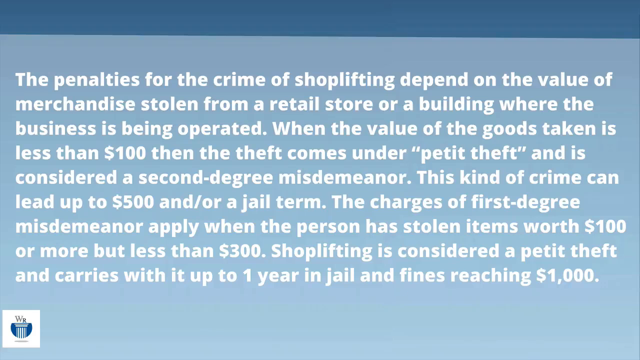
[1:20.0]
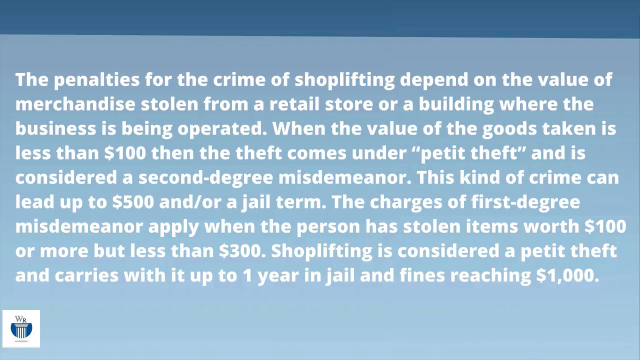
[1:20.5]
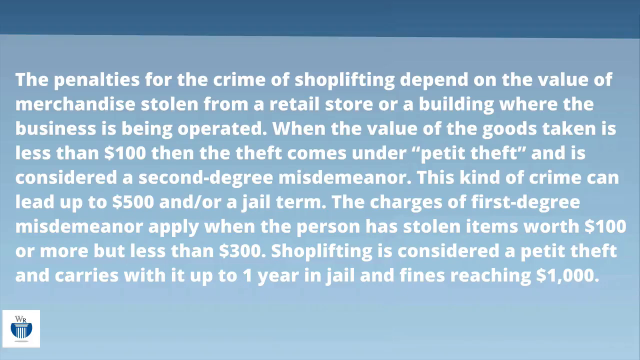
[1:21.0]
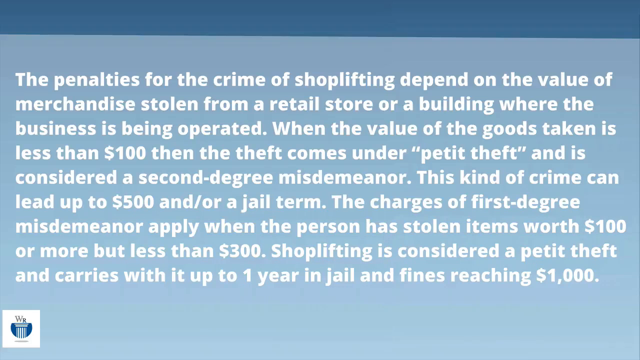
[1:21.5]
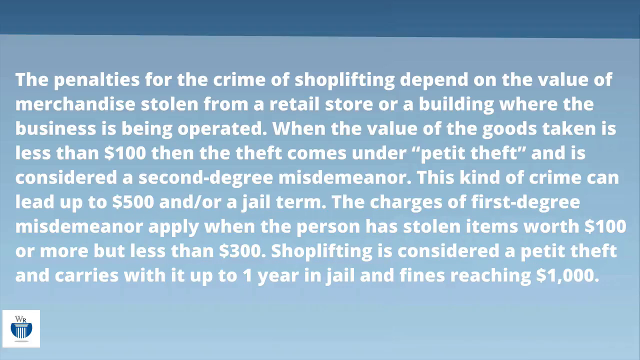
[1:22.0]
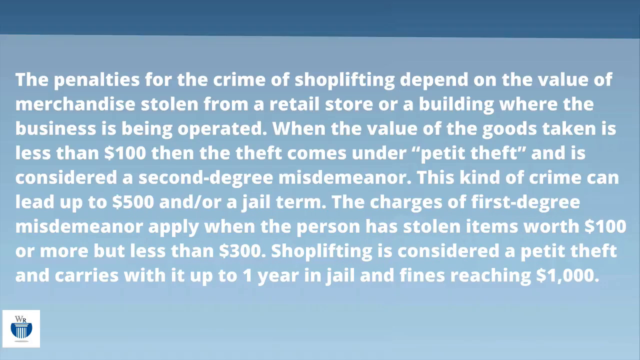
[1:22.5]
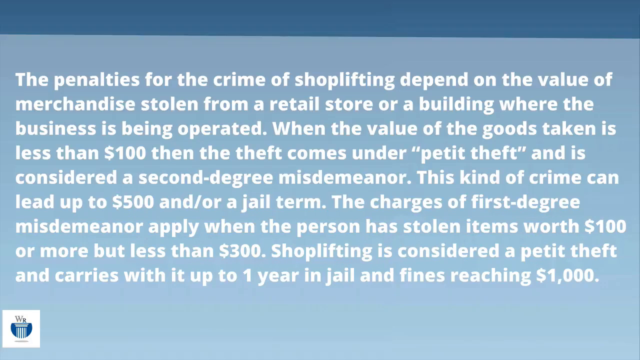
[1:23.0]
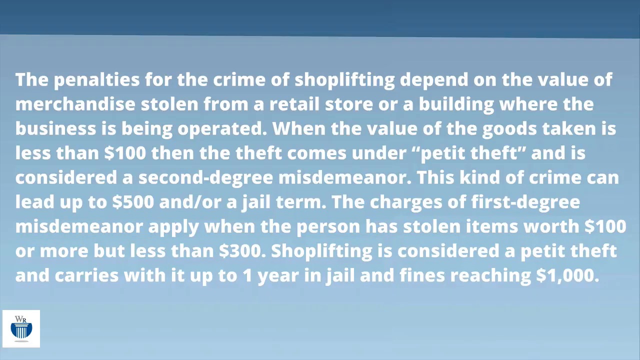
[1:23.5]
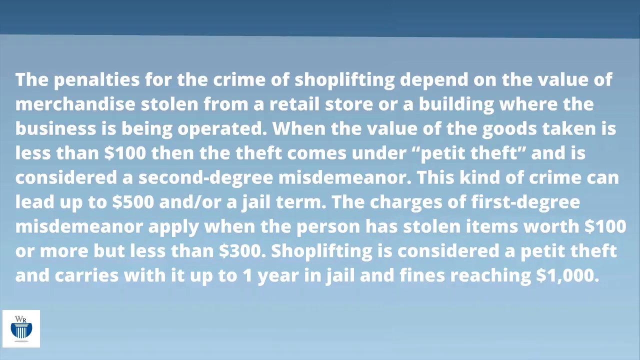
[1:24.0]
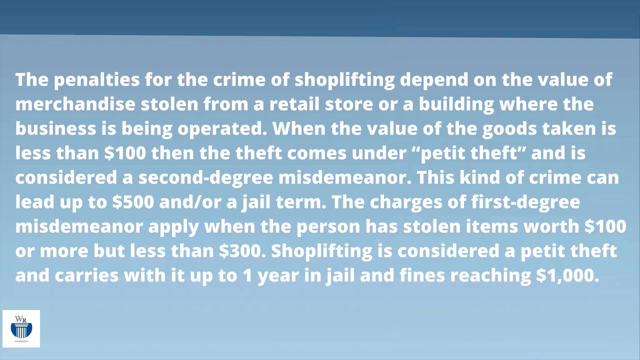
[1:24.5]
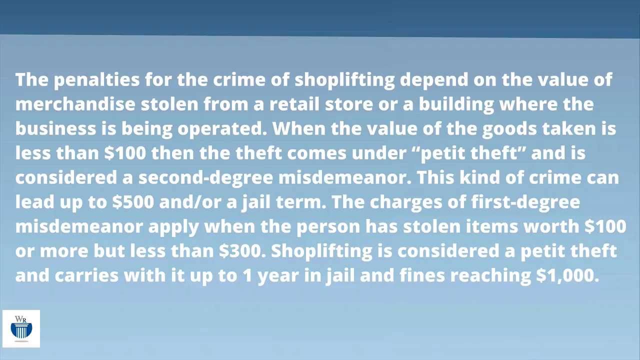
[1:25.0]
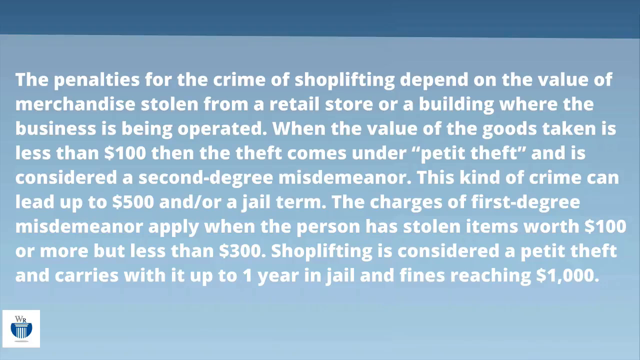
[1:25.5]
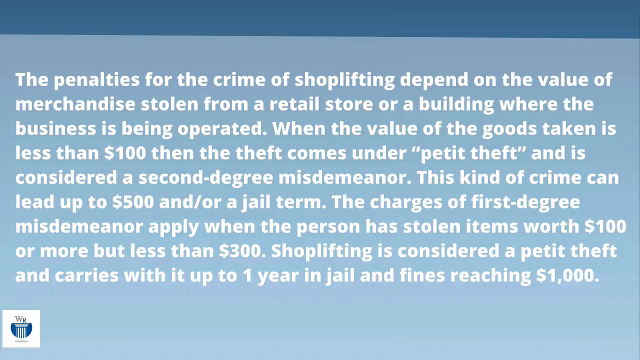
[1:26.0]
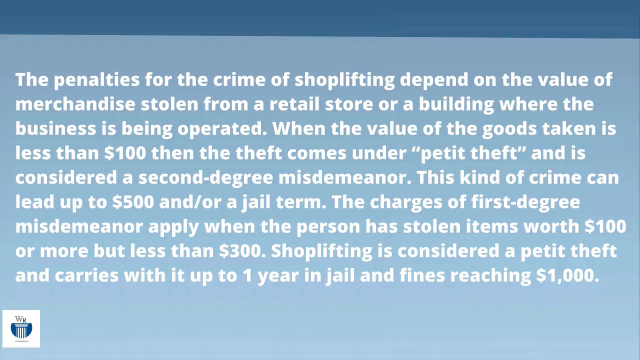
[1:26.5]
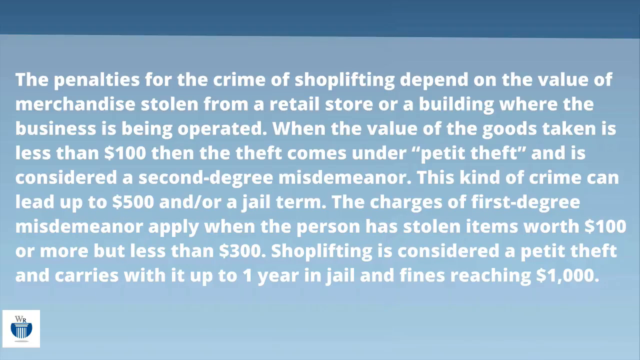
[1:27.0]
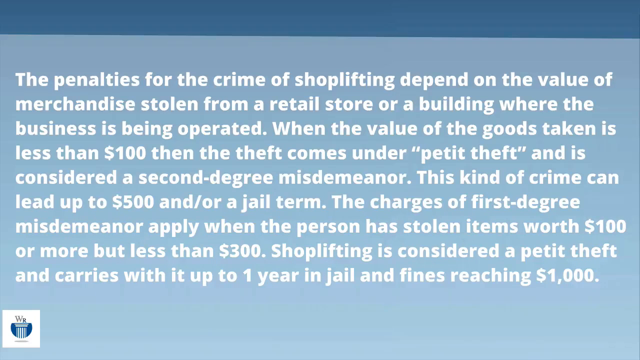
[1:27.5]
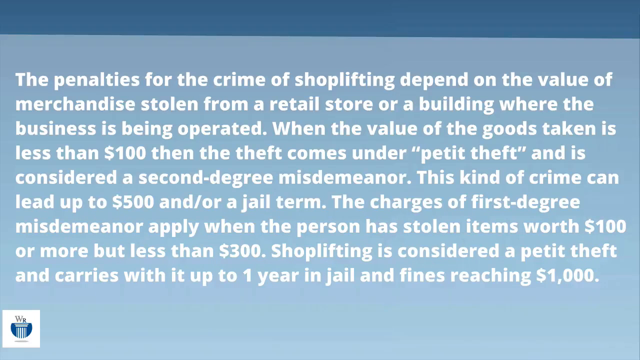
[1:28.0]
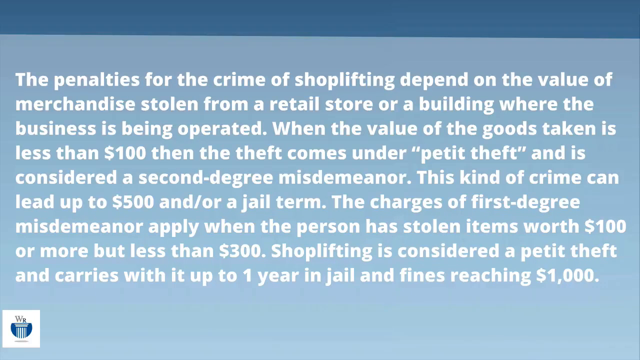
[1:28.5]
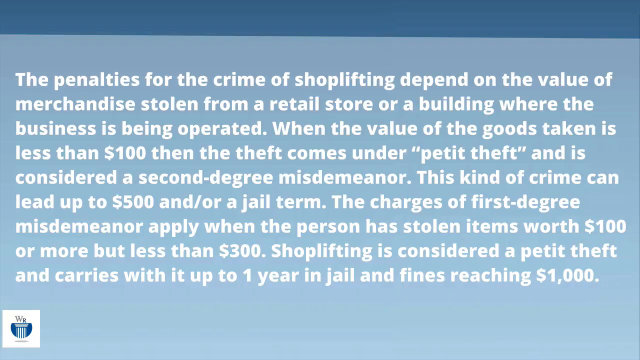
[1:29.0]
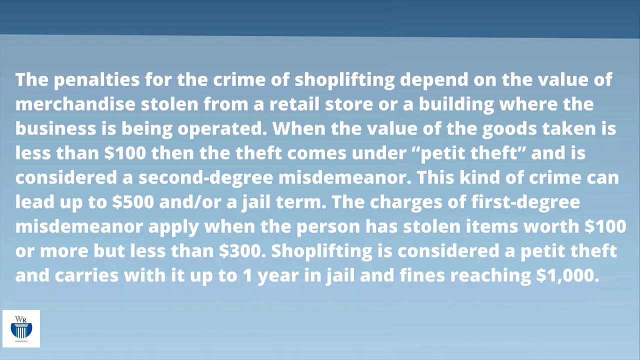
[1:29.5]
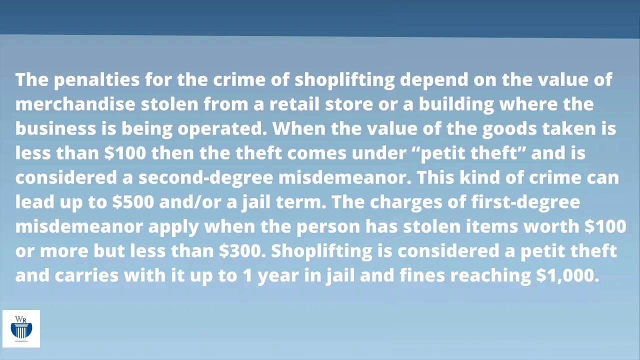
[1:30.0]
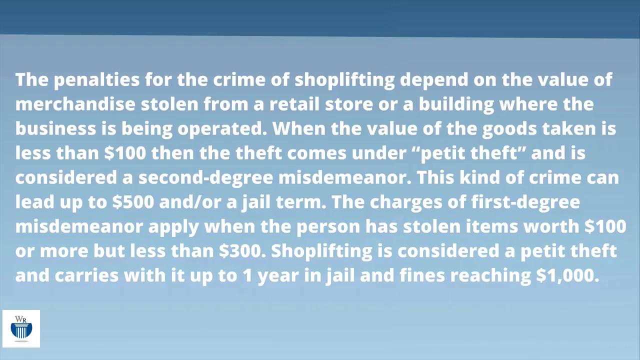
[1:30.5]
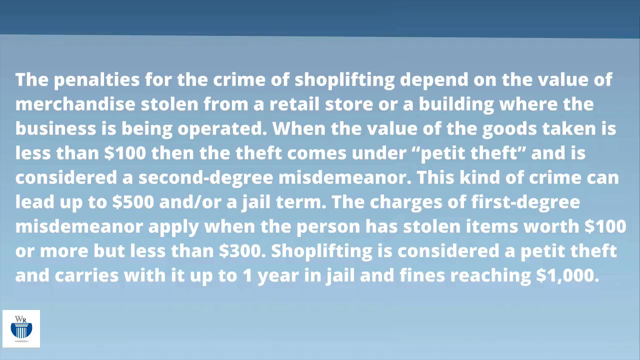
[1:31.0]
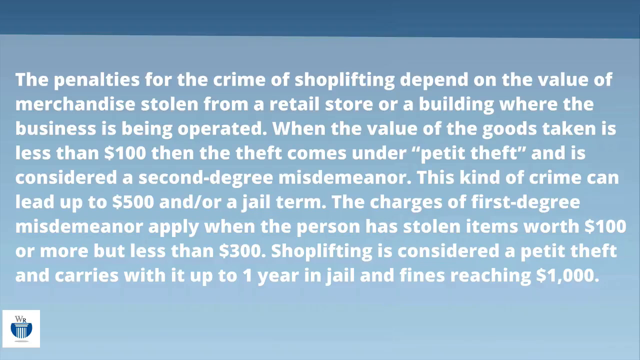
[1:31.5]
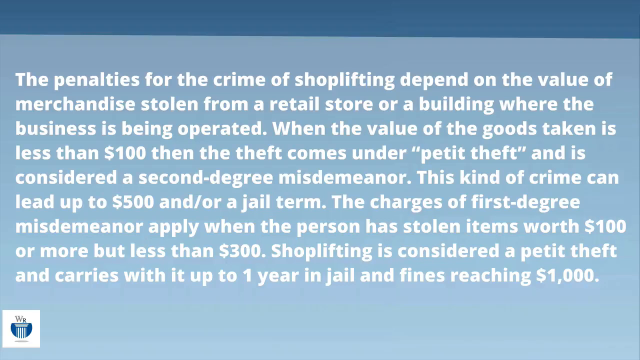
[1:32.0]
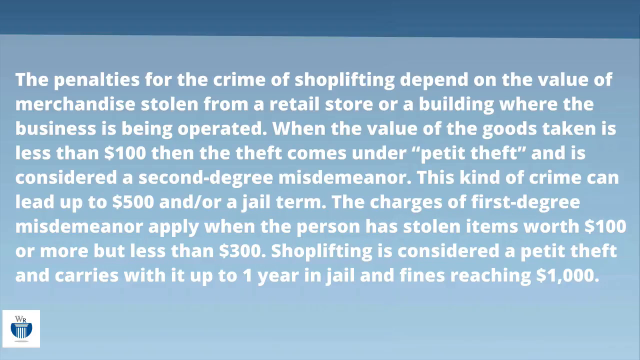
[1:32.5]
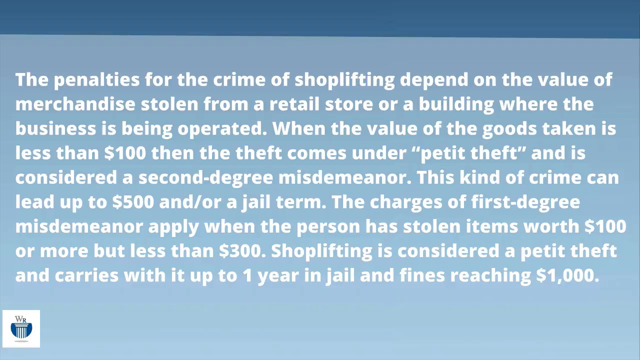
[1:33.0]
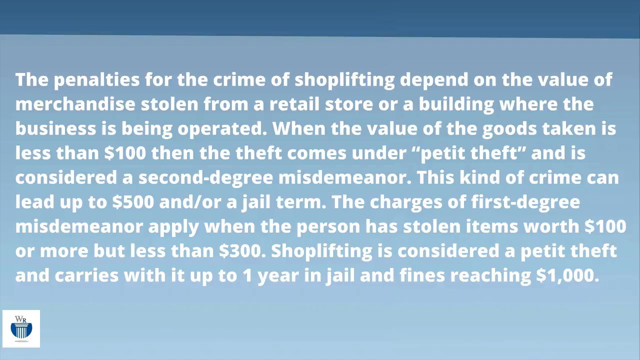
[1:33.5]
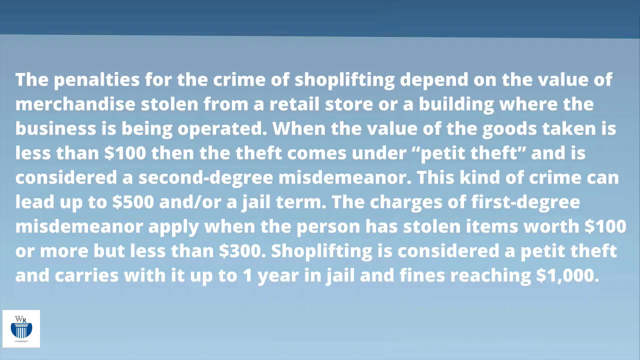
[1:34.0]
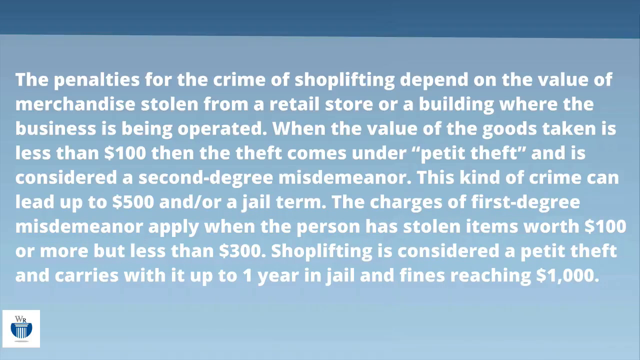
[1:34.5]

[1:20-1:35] Bold white lettering on a dark blue screen gives information about penalties for shoplifting. It reads: "the penalties for the crime of shoplifting depend on the value of merchandise stolen from a retail store or a building where the business is being operated. When the value of the goods taken is less than $100, then the theft comes under petite theft, and is considered a second-degree misdemeanor. This kind of crime can lead up to $500 and or a jail term. The charges of first-degree misdemeanor apply when the person has stolen items worth $100 or more, but less than $300. Shoplifting is considered a petite theft and carries with it up to one year in jail time and fines reaching $1,000."